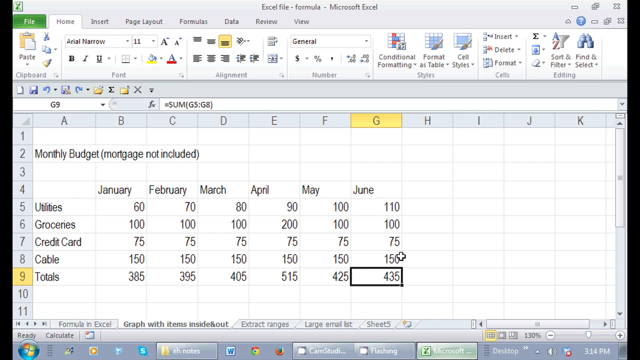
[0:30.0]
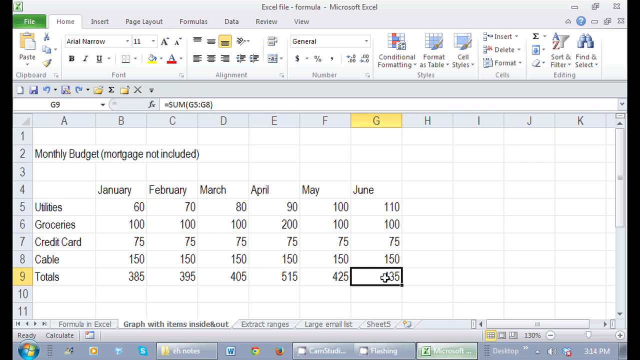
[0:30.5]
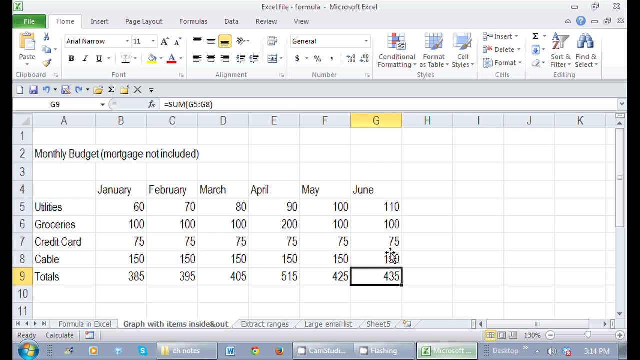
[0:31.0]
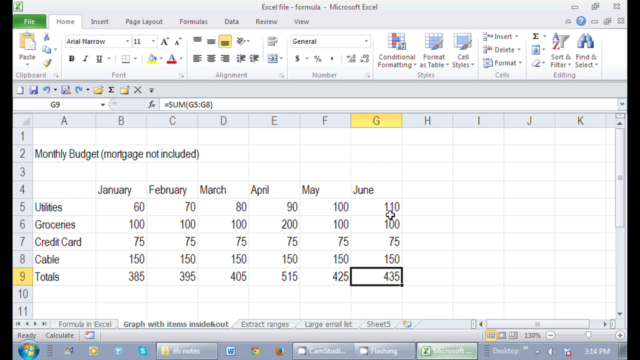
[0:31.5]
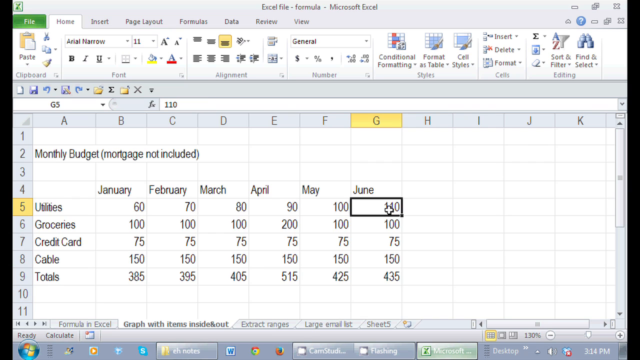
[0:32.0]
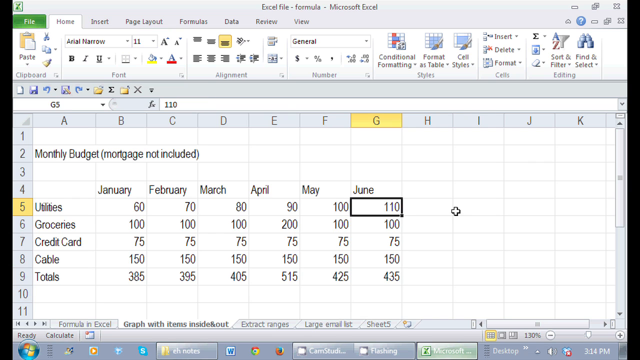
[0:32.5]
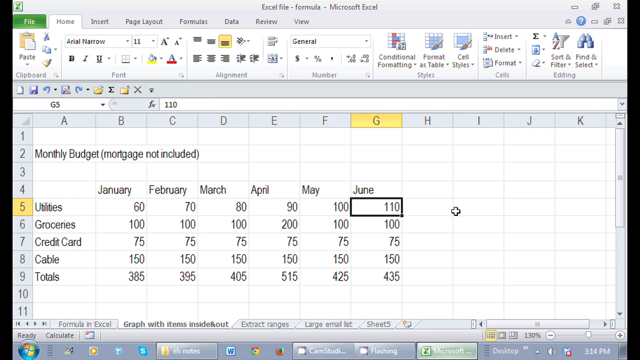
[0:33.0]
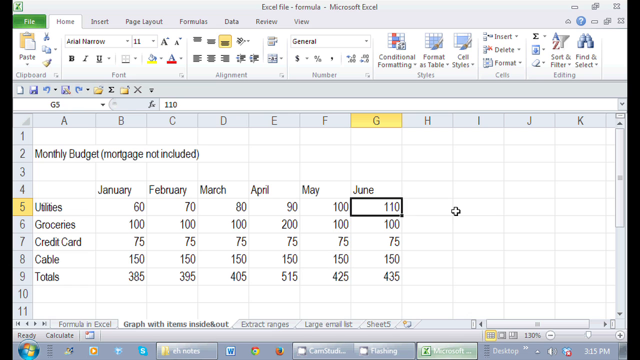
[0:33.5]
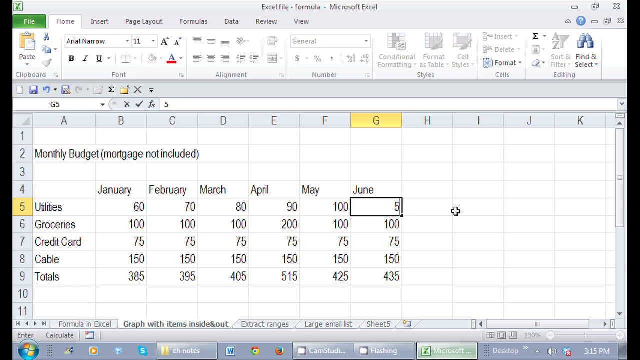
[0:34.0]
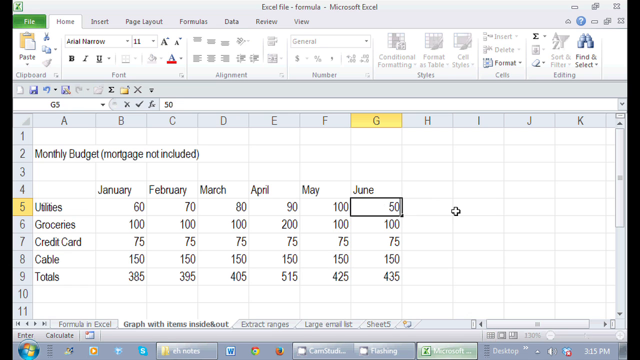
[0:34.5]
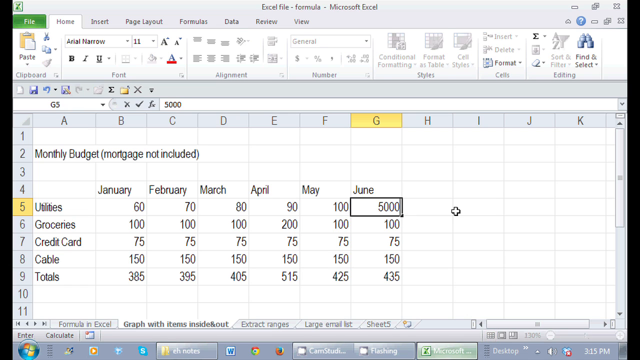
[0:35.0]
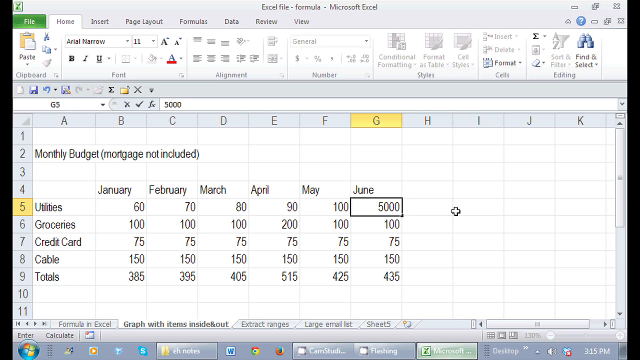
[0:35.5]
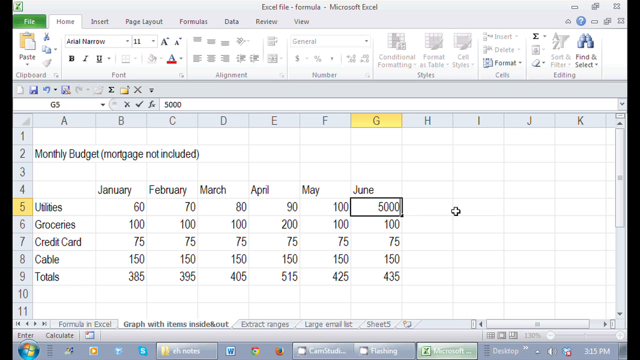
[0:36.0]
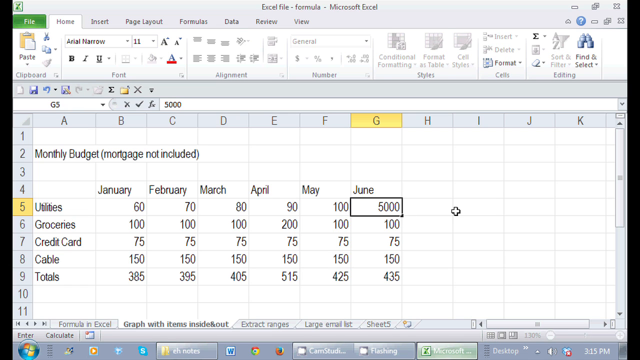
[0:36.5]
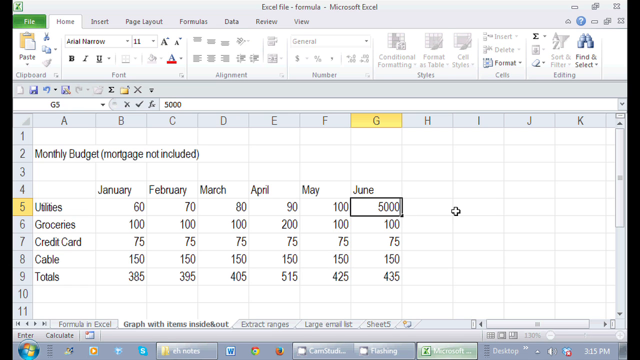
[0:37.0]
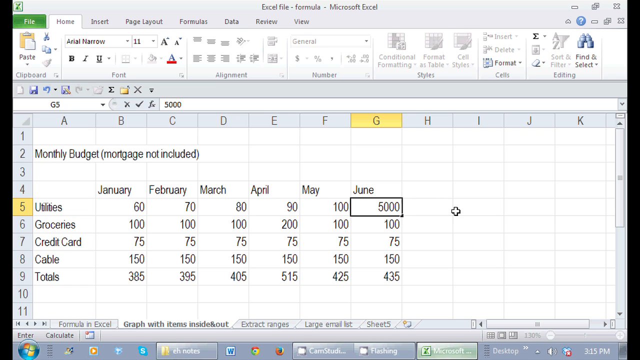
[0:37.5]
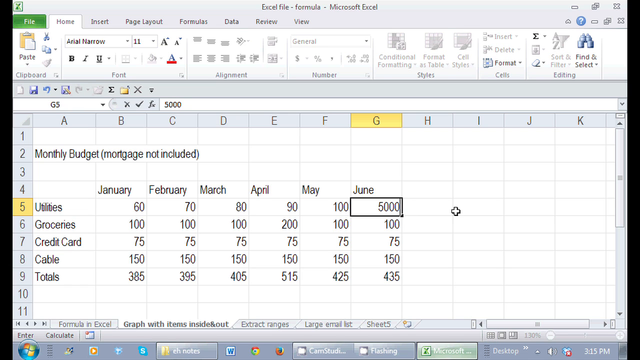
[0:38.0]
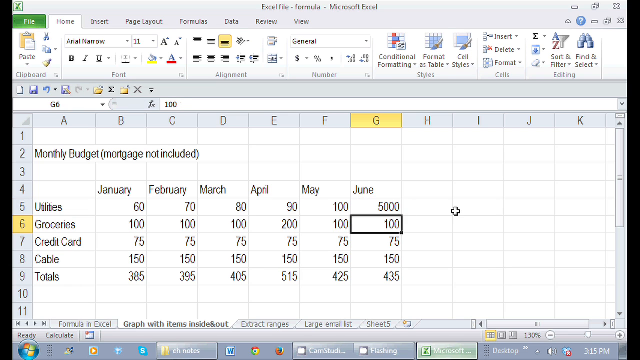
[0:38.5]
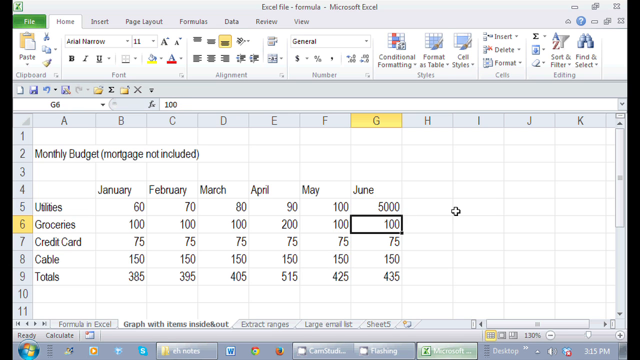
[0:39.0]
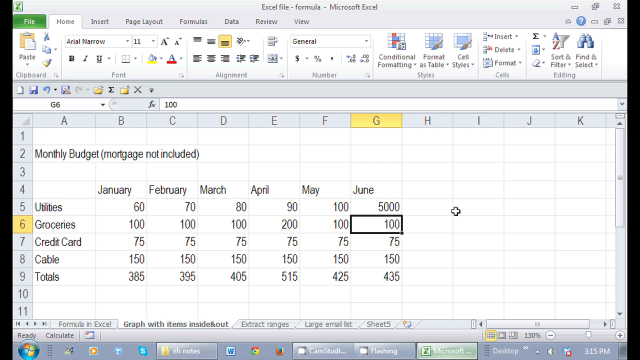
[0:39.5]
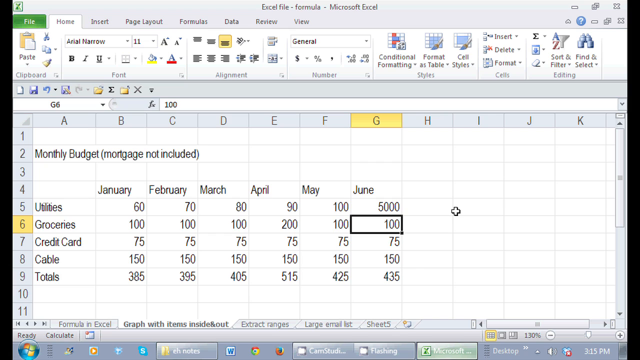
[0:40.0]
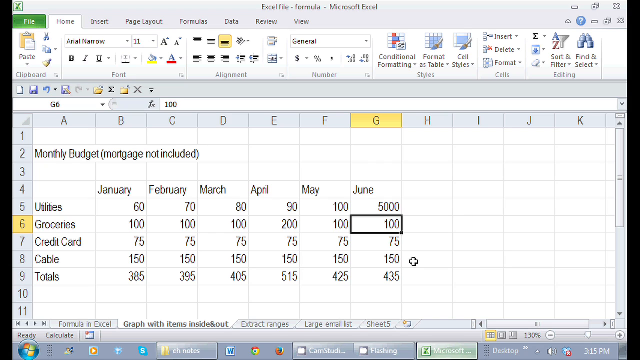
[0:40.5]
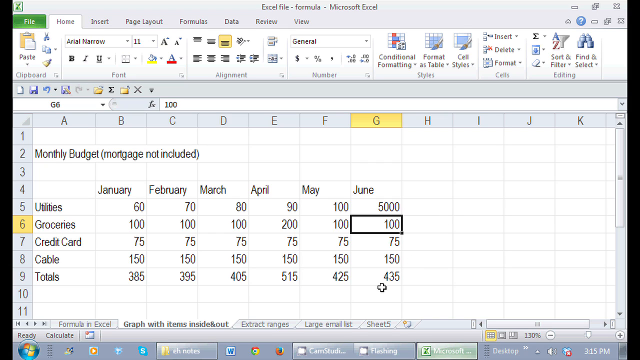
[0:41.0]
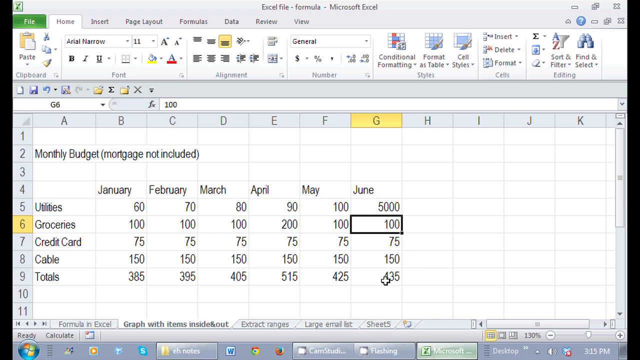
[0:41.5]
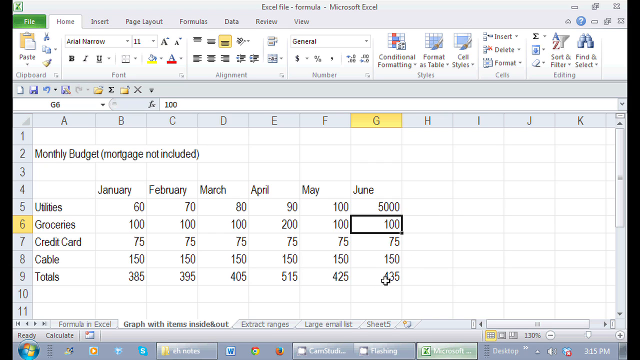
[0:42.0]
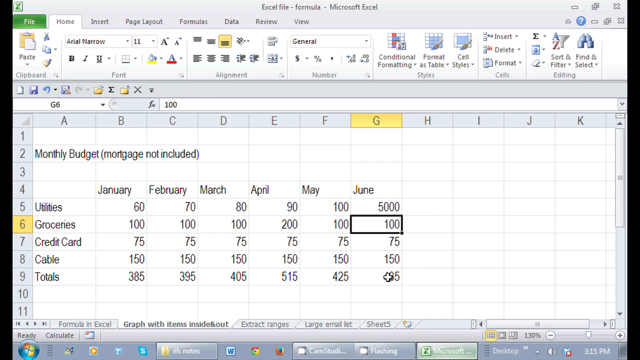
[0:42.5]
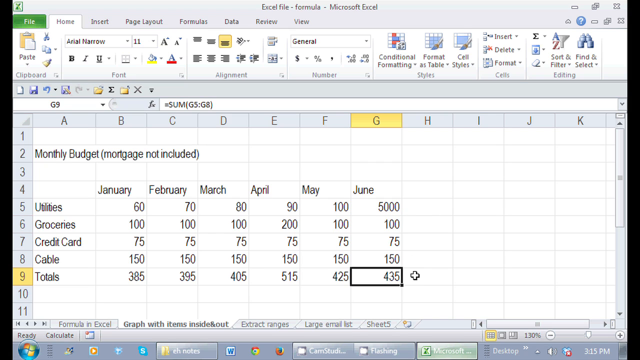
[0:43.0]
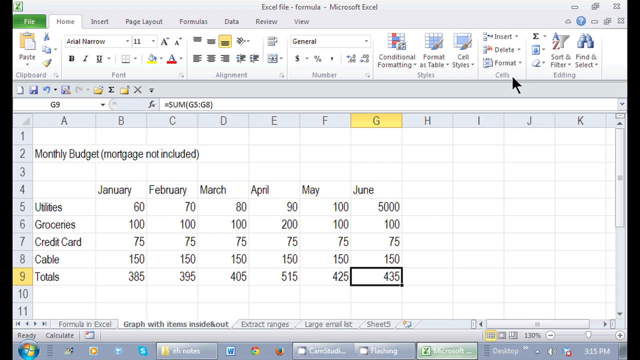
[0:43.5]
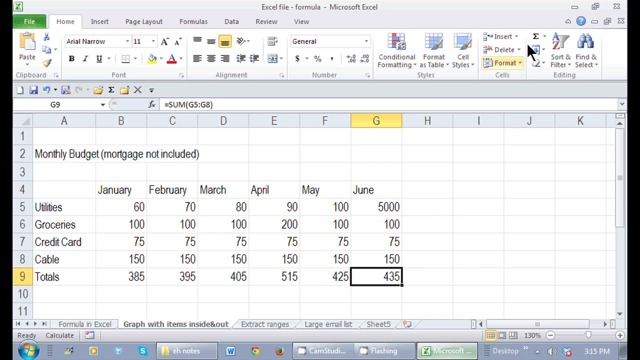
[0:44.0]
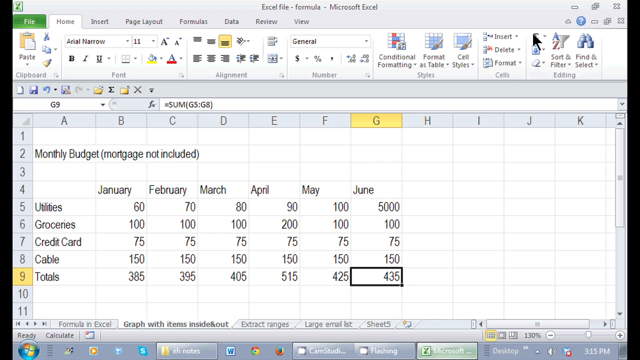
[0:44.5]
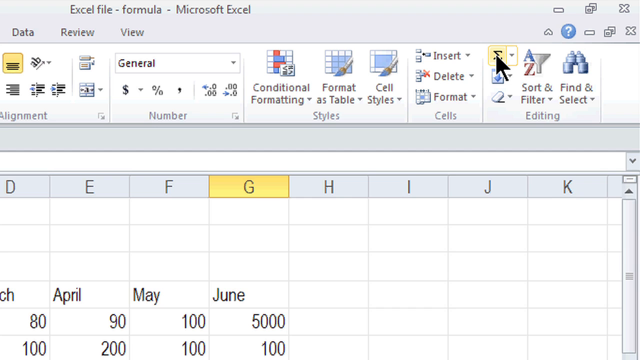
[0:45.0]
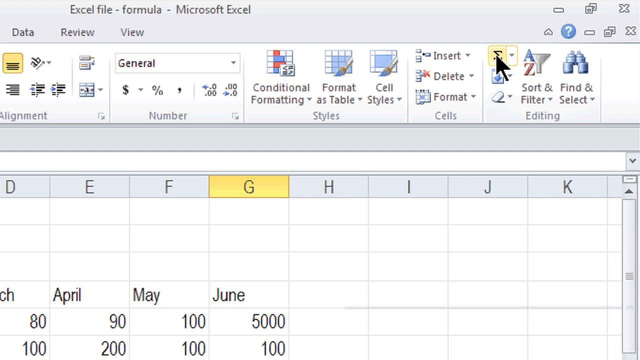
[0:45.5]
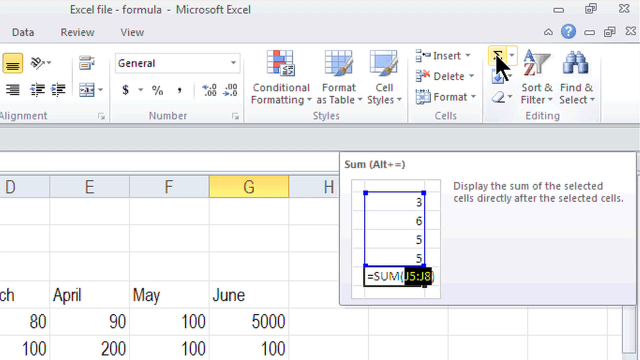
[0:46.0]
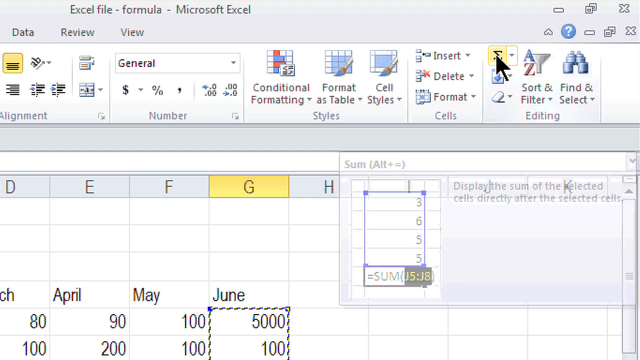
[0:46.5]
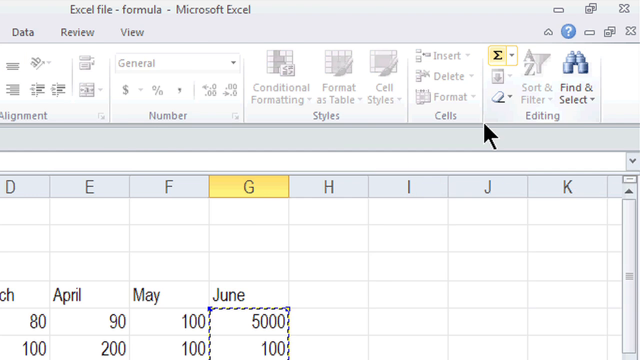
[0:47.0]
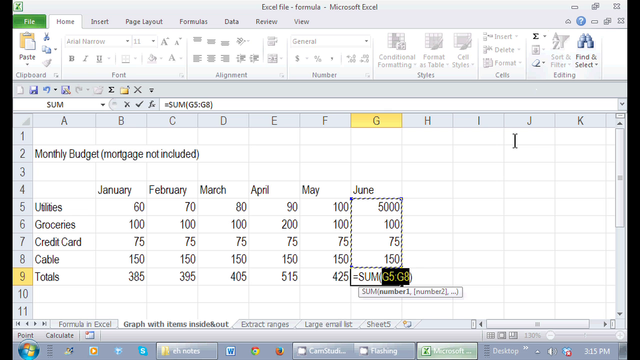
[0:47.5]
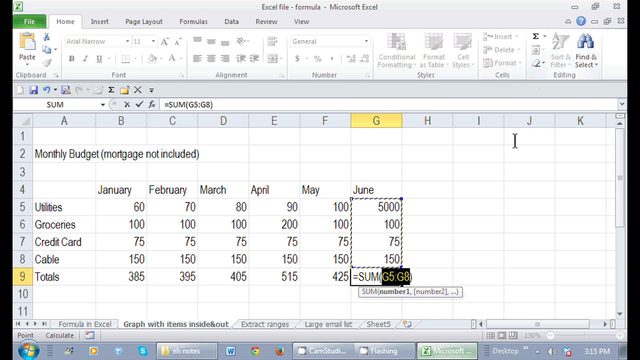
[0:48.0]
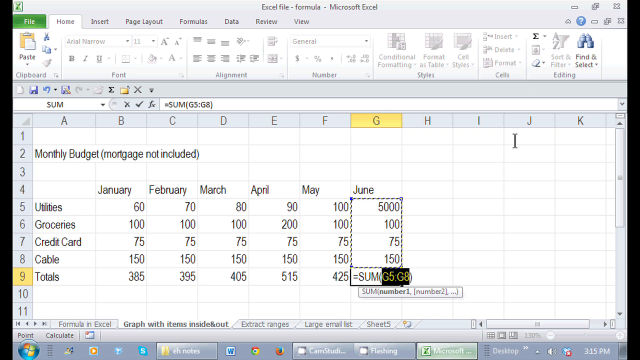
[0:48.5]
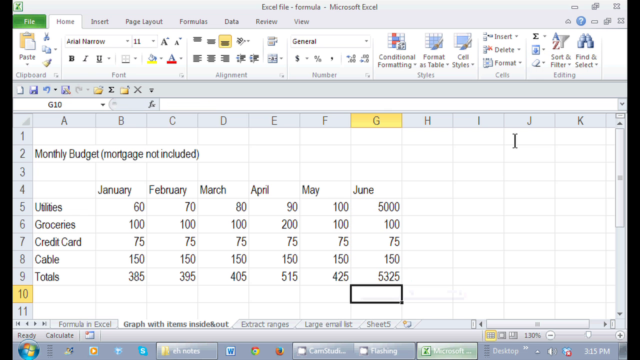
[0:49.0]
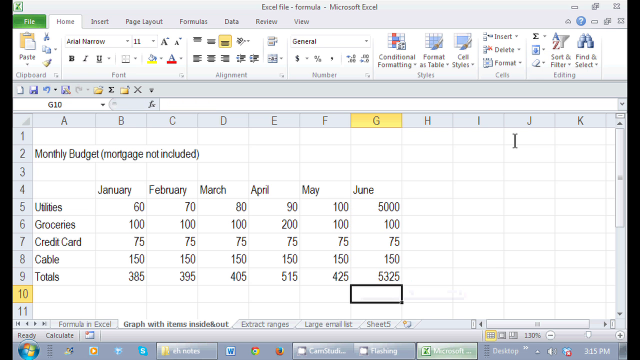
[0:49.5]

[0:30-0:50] On the Excel sheet, the June column is highlighted, and the woman changes the first total under utilities in June from 110 to 5,000. She scrolls down to other June categories such as groceries and totals and uses a sum equation, adding up the rows to get a grand total of the utilities, groceries, credit card and cable numbers for June in the totals section. The formula appears to be how the columns and totals were created for each category and for the January, February, March, April and May columns. Her actions are slow and easy to follow.